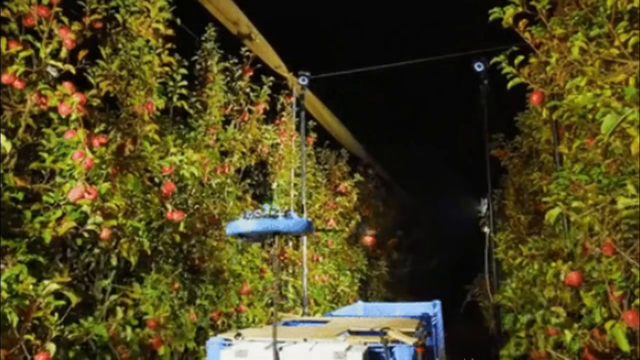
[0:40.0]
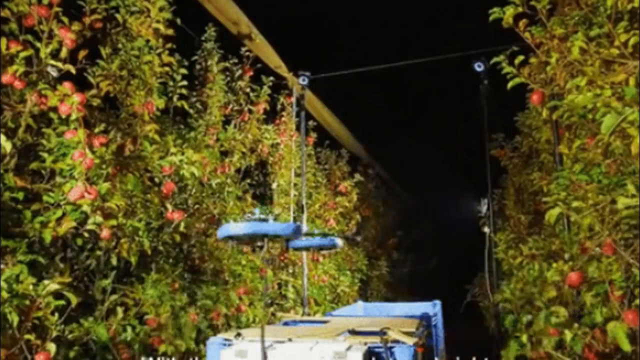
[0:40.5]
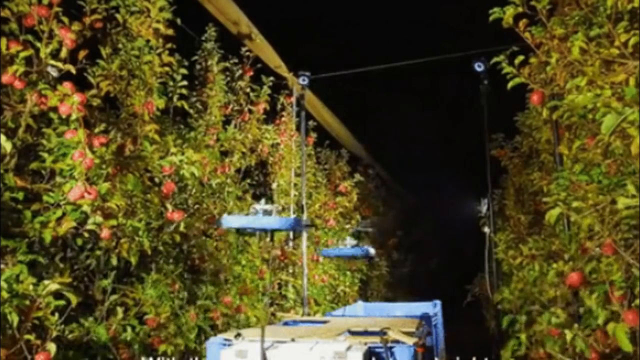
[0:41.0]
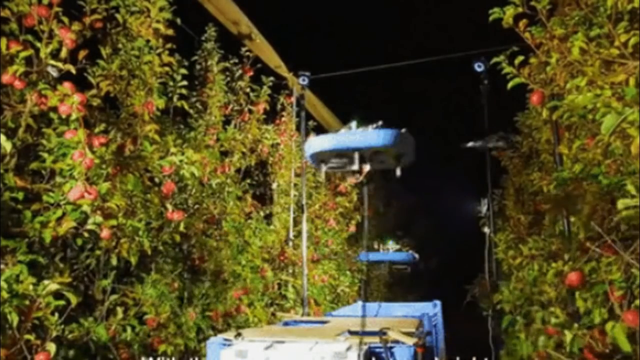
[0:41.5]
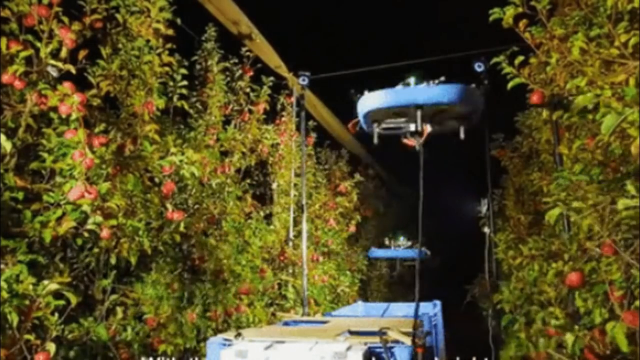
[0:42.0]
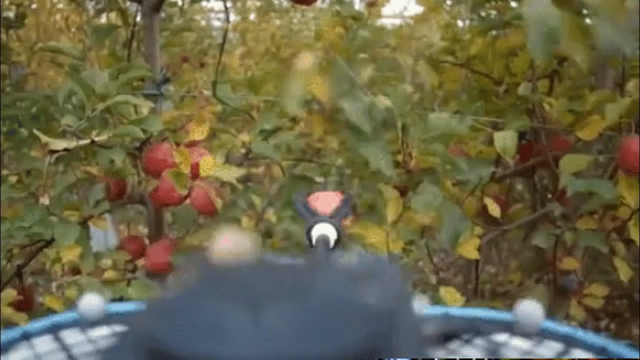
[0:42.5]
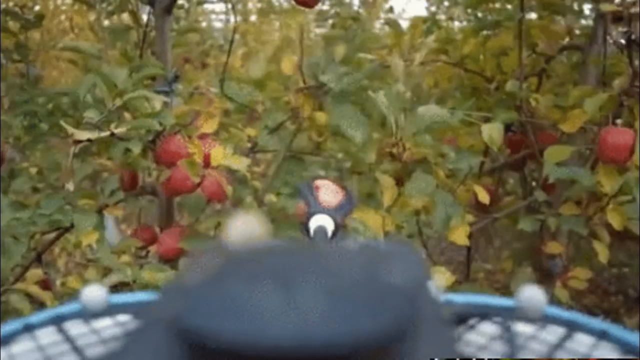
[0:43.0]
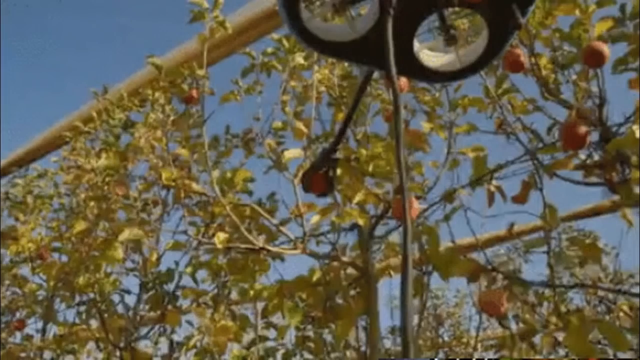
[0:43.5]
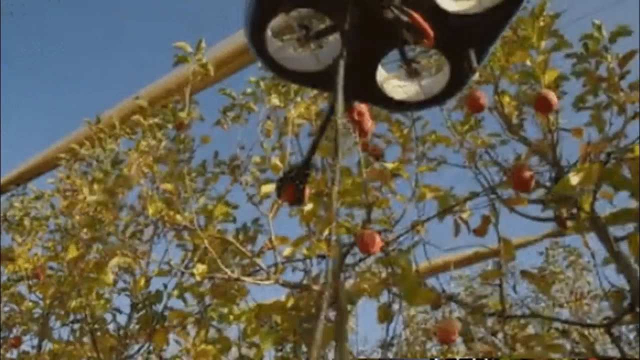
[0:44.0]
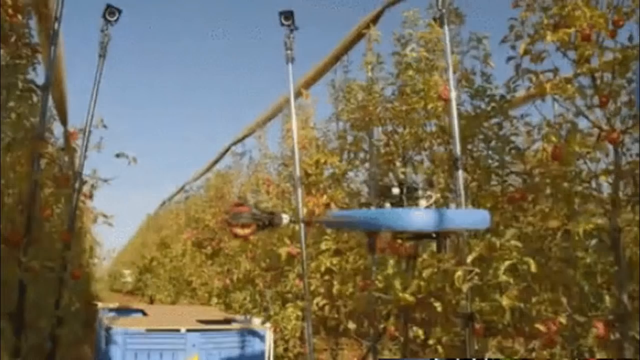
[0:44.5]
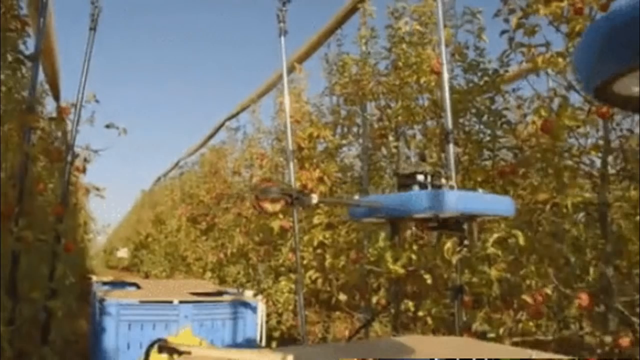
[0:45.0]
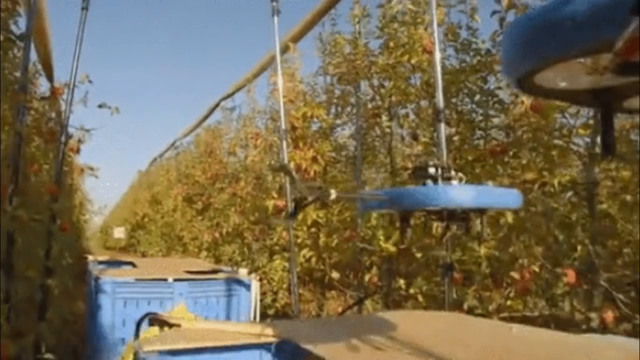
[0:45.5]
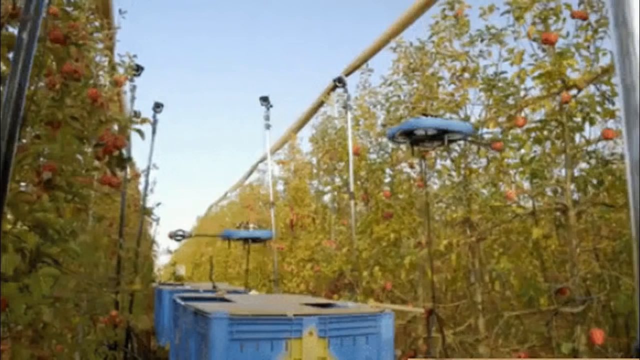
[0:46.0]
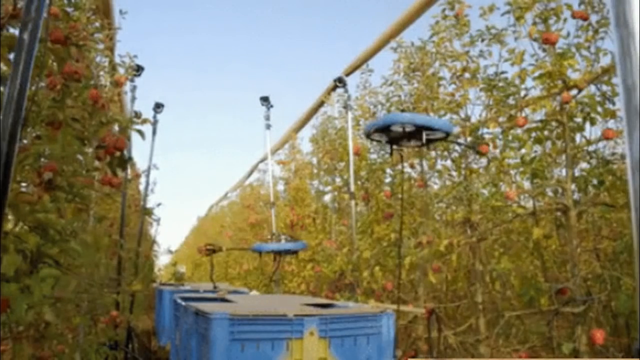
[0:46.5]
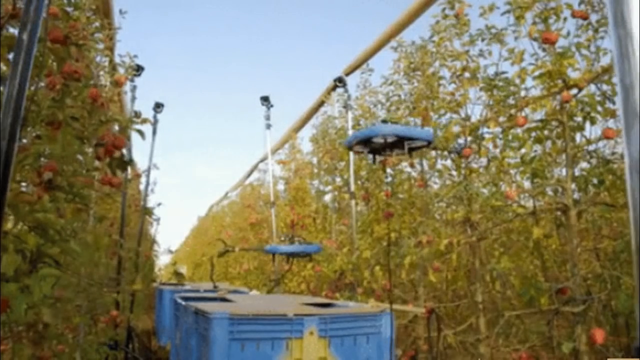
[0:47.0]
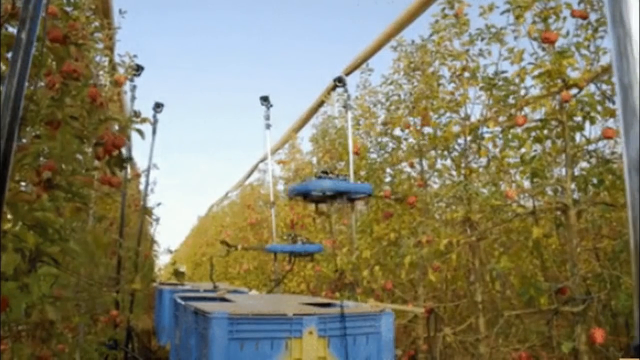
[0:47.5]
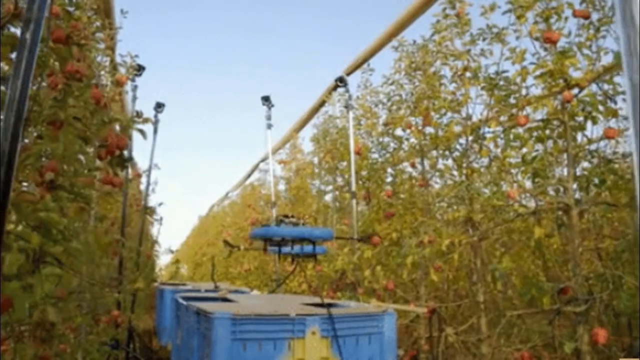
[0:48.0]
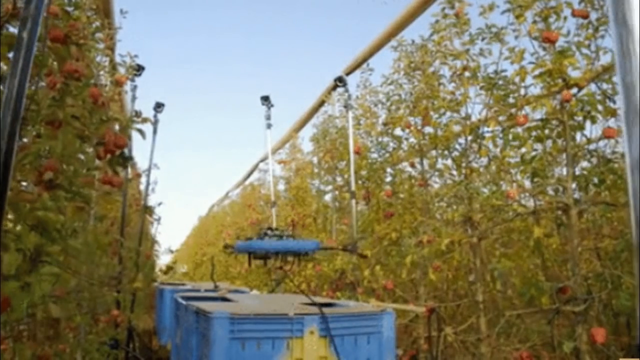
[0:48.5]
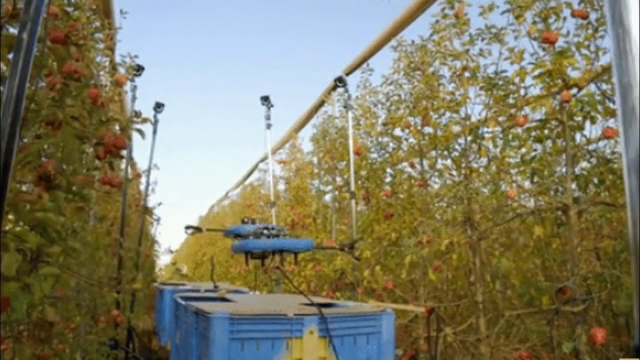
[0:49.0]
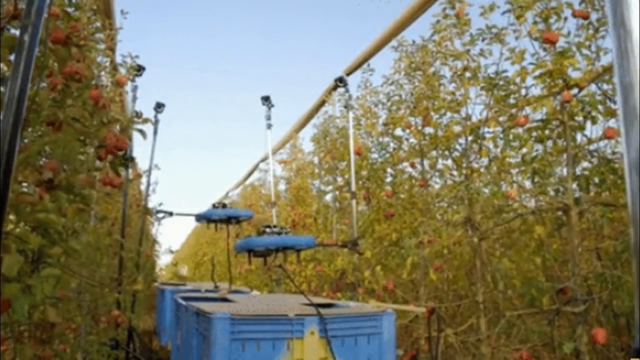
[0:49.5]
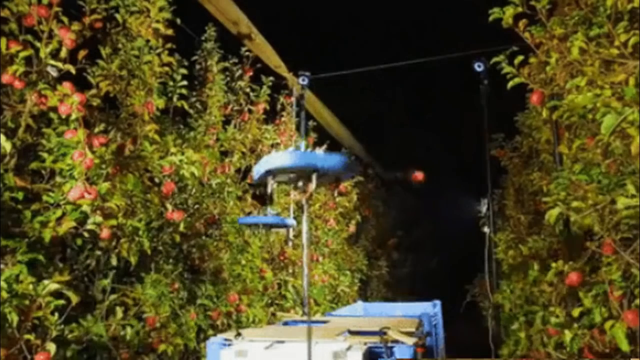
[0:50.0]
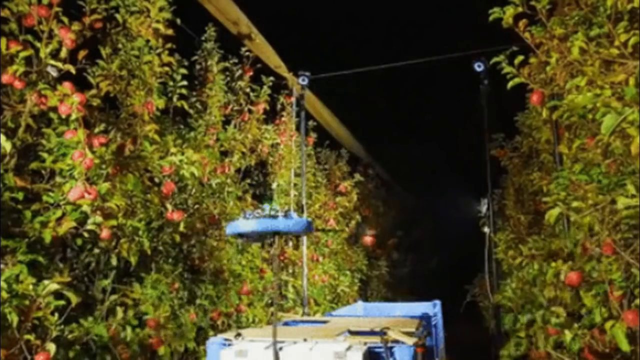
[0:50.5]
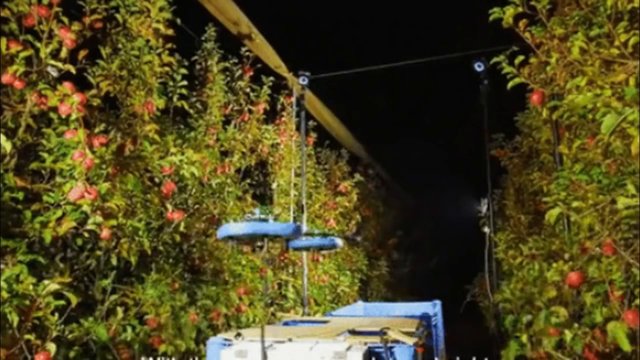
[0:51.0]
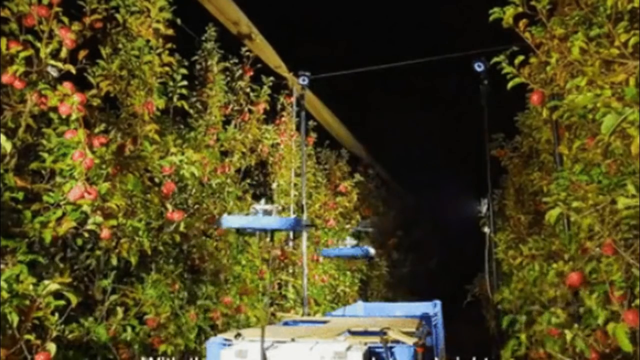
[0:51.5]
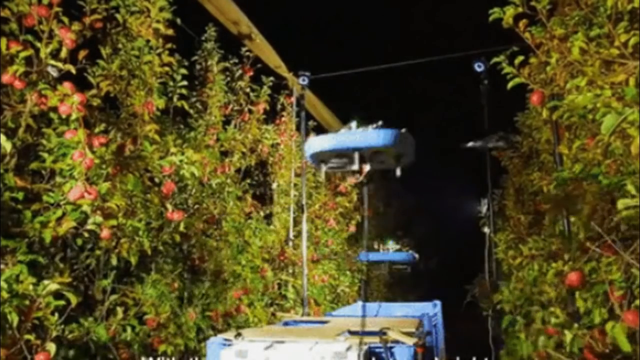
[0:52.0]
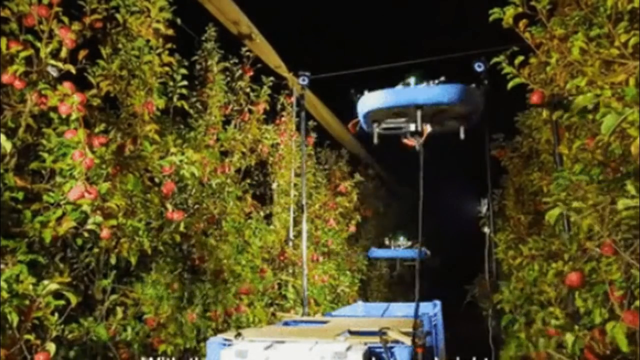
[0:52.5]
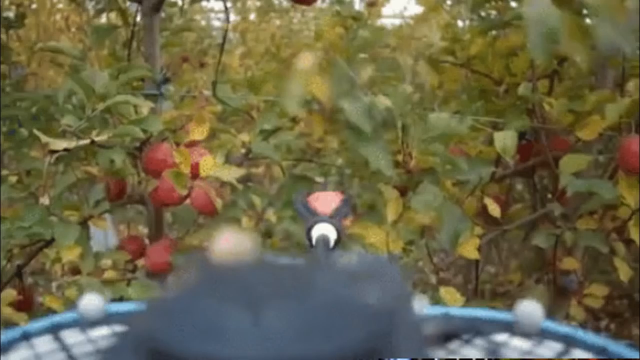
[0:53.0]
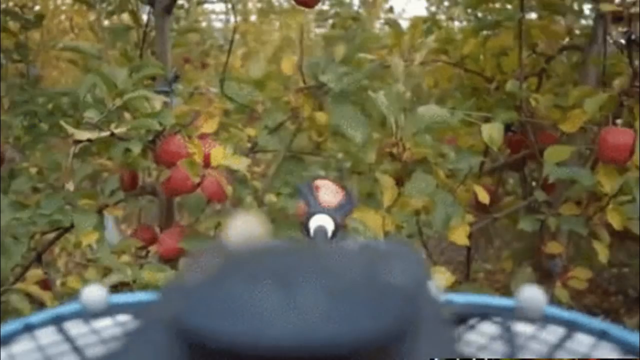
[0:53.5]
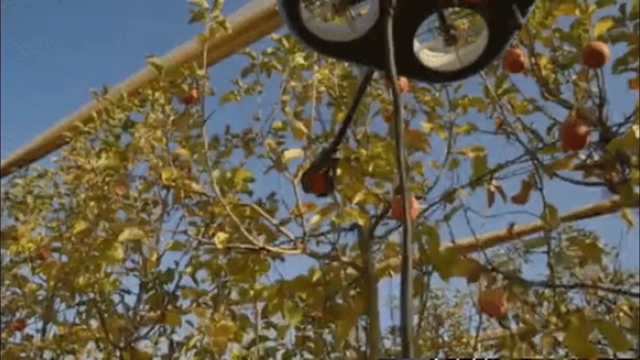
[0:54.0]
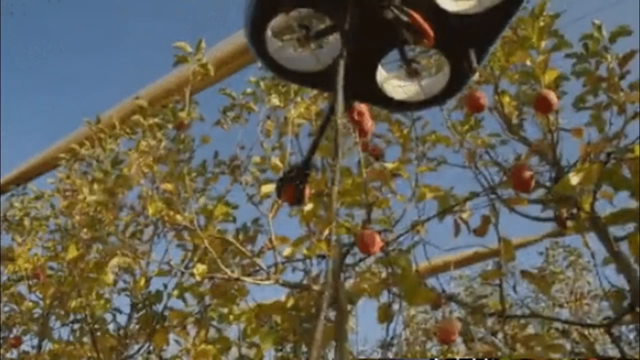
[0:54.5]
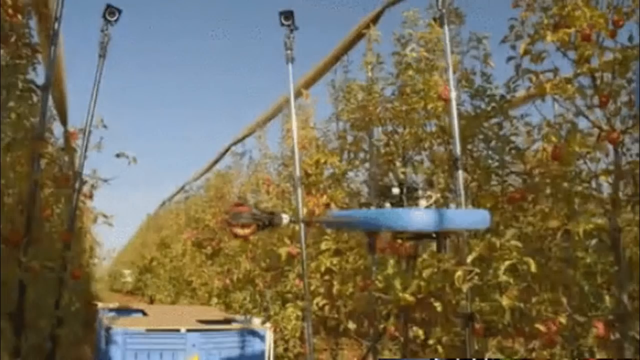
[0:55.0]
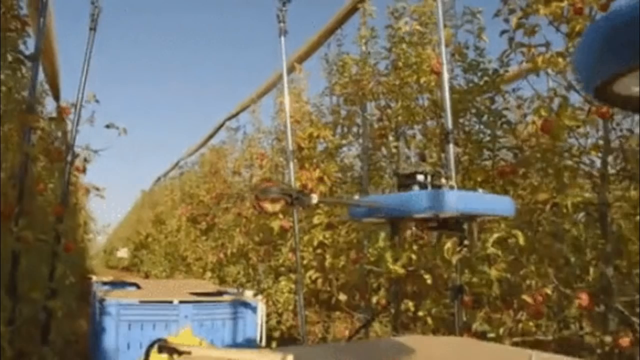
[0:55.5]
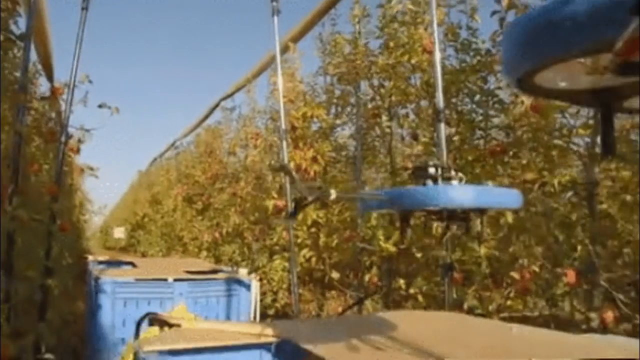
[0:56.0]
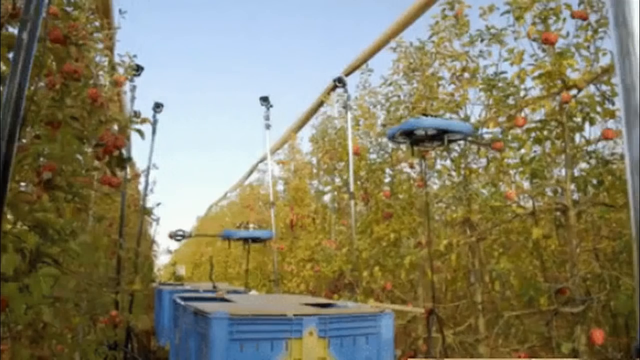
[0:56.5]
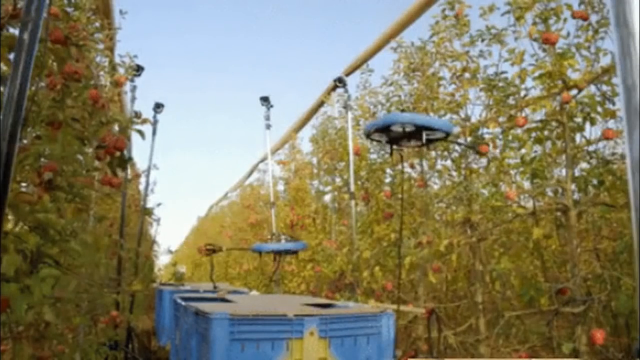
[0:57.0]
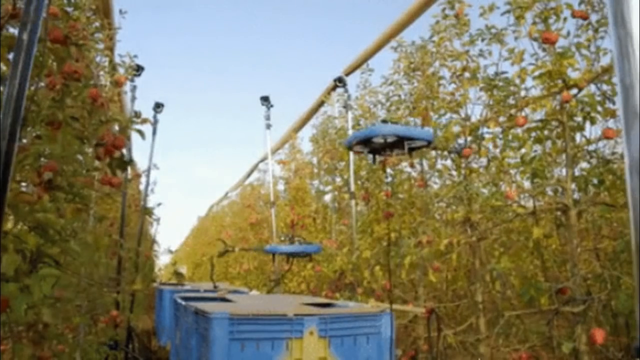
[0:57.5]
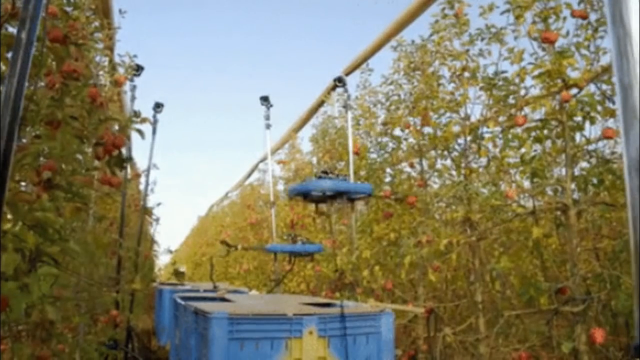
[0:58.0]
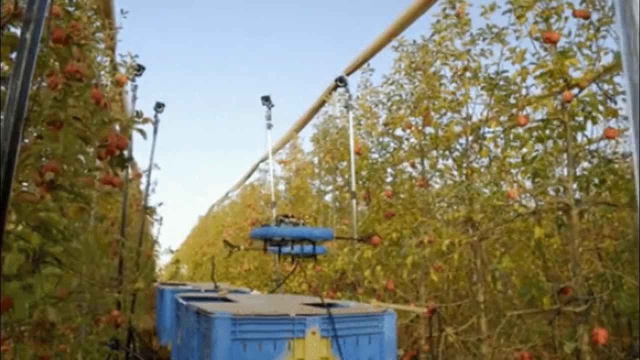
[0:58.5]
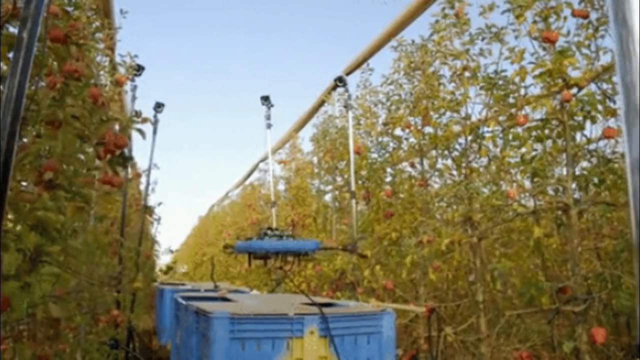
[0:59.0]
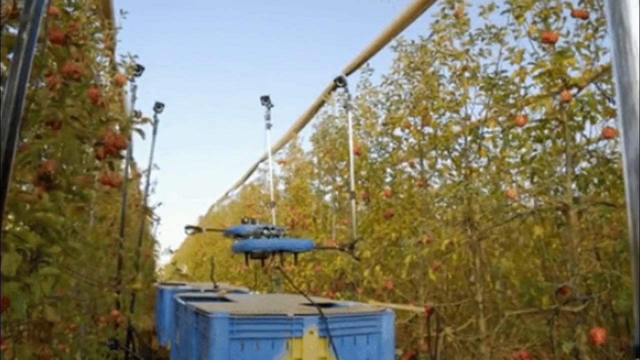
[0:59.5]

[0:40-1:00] It is pitch black outside, but the space between the rows of fruit trees is very well illuminated, and equipment between the rows moves around. The scene then changes to daytime, showing many rows of fruit trees, with the row extending far back. Small blue devices that look kind of like little airplanes seem to be monitoring the trees. They kind of flutter about, with lights visible below them, and the fruit on the trees is visible.